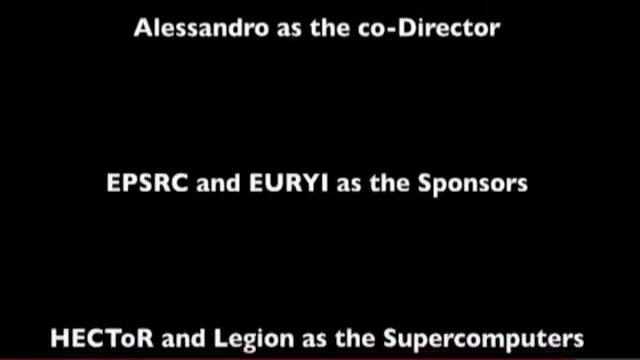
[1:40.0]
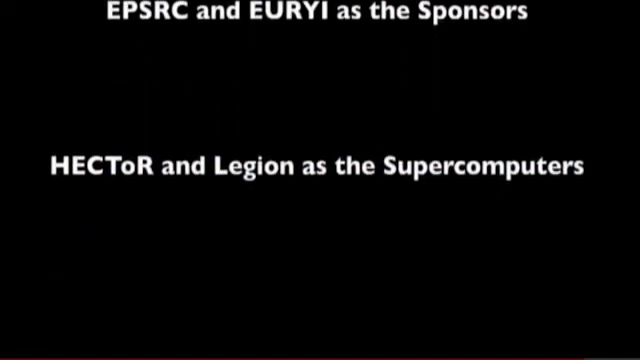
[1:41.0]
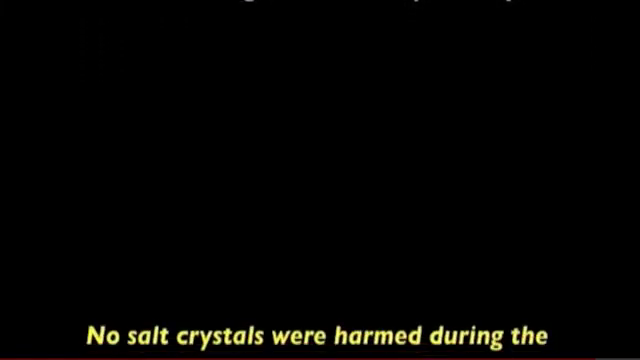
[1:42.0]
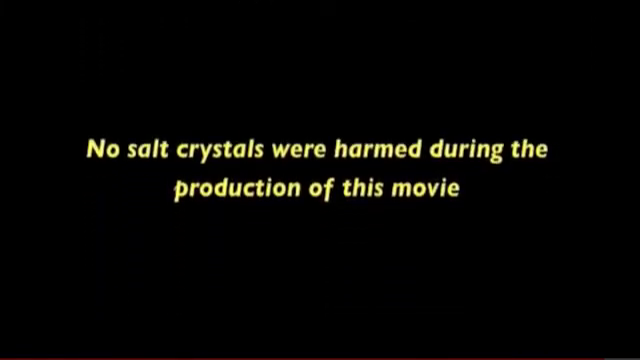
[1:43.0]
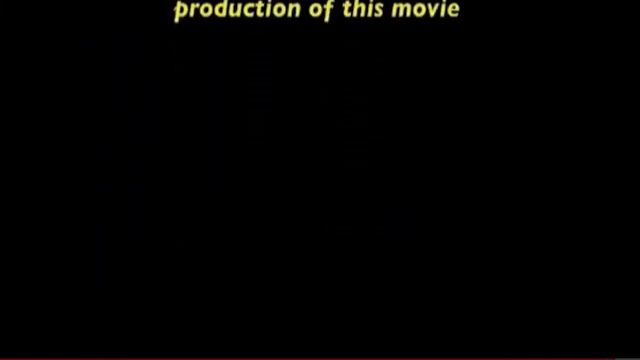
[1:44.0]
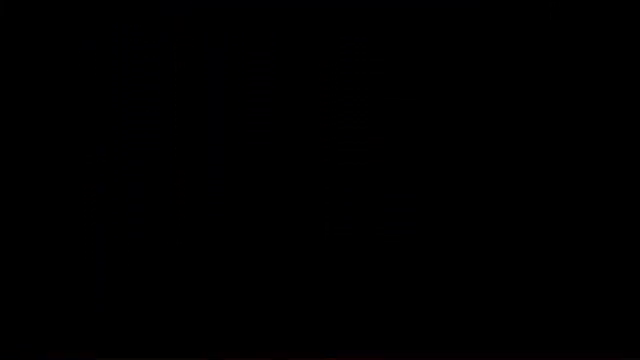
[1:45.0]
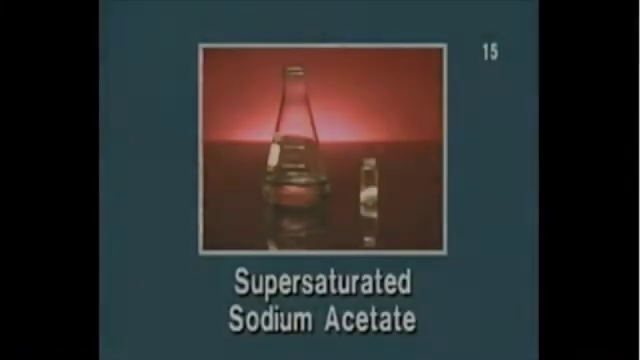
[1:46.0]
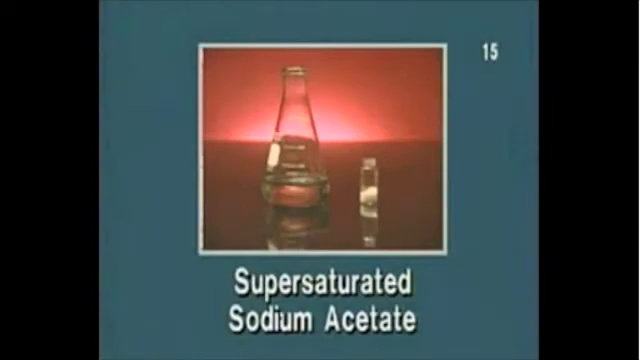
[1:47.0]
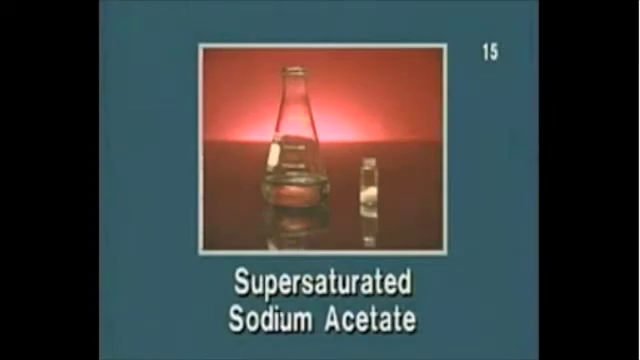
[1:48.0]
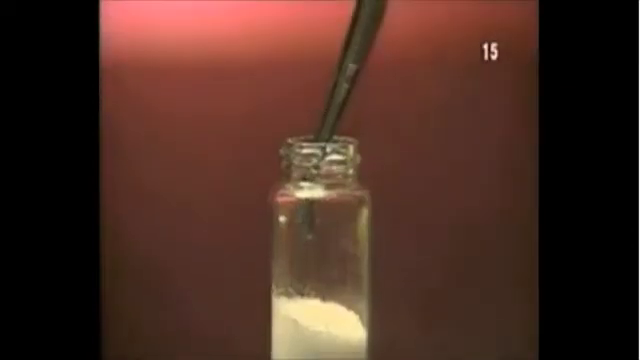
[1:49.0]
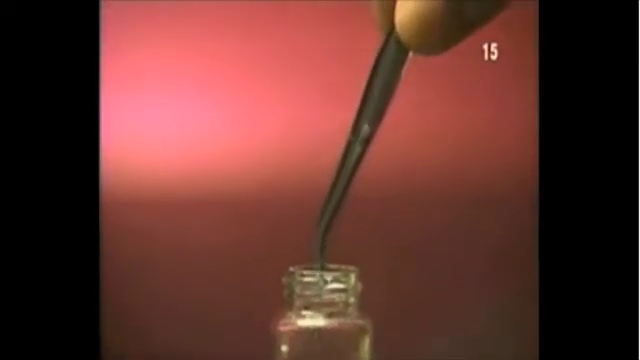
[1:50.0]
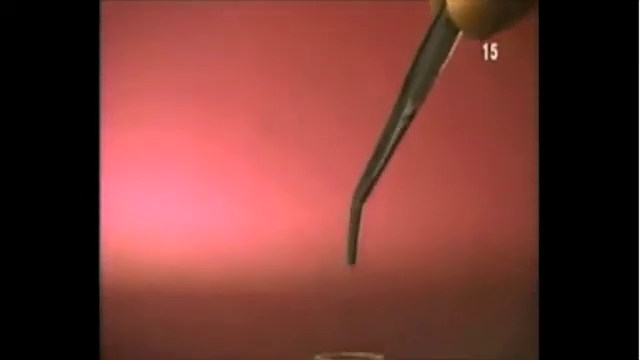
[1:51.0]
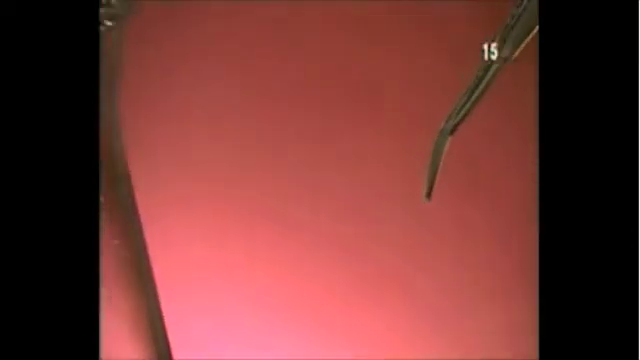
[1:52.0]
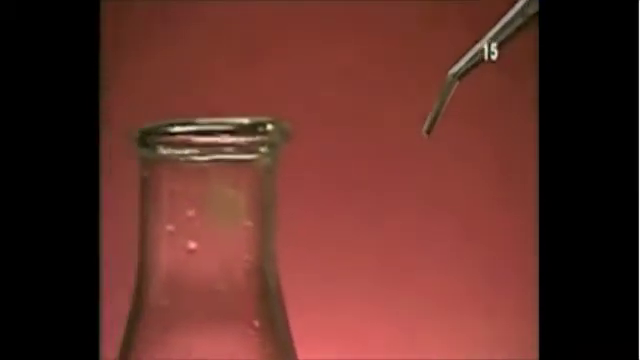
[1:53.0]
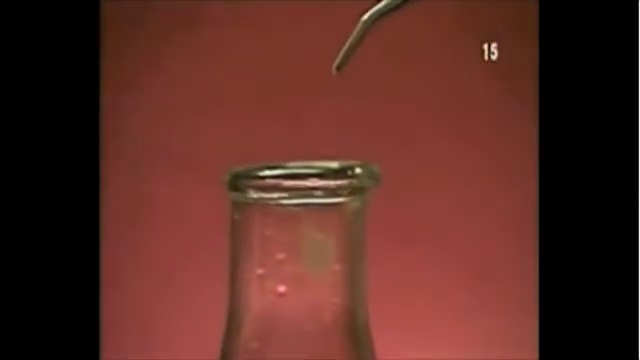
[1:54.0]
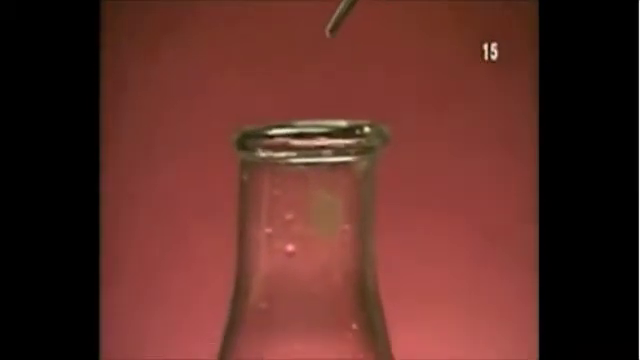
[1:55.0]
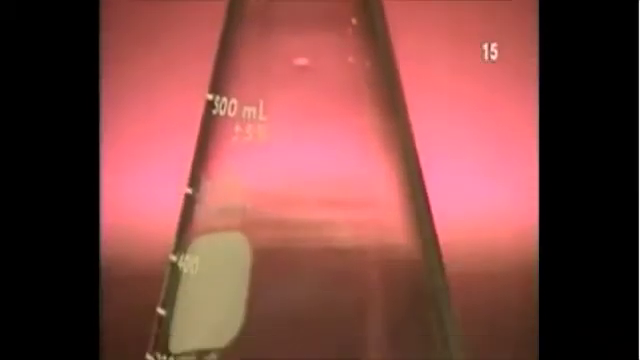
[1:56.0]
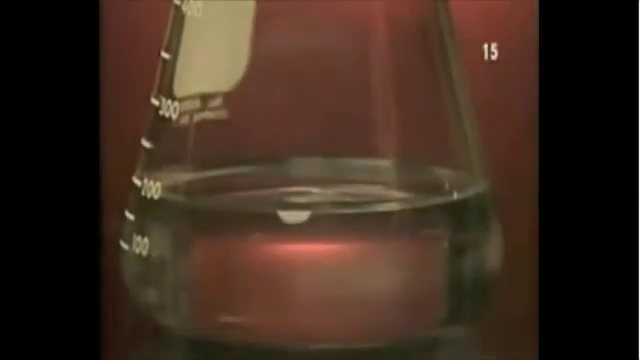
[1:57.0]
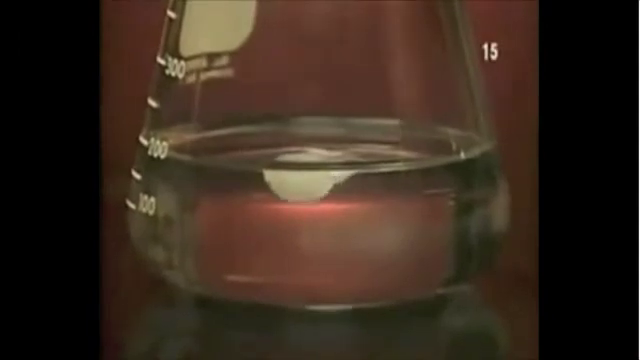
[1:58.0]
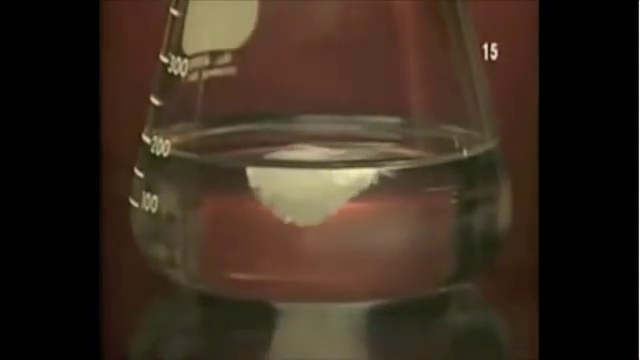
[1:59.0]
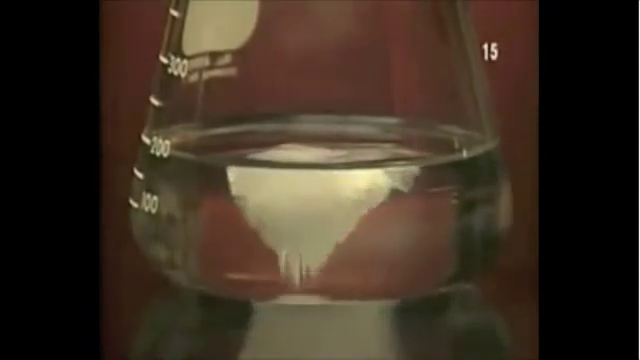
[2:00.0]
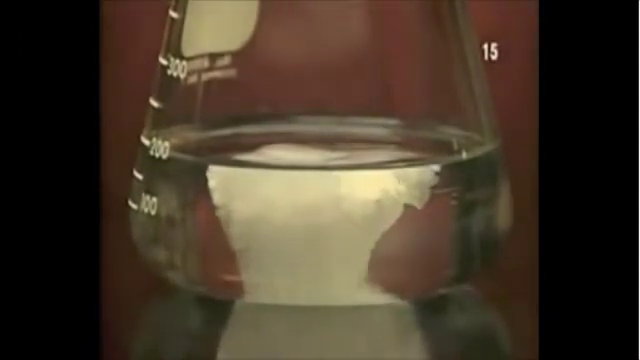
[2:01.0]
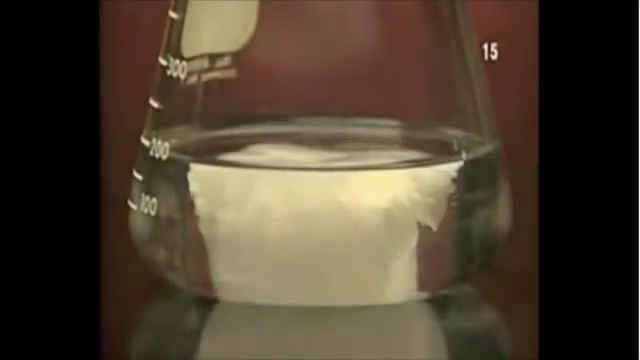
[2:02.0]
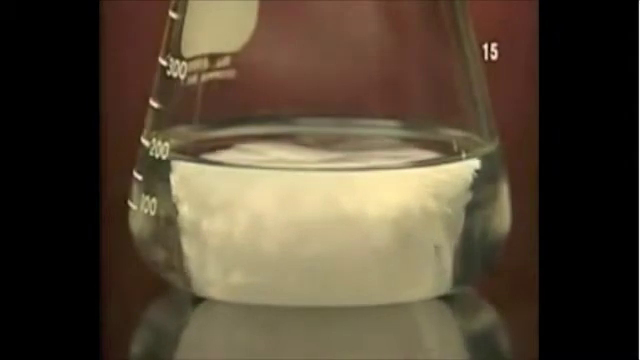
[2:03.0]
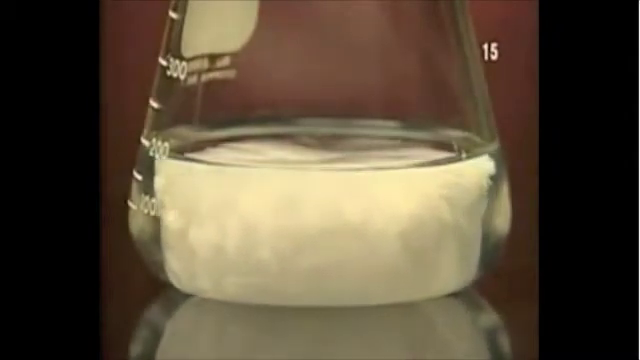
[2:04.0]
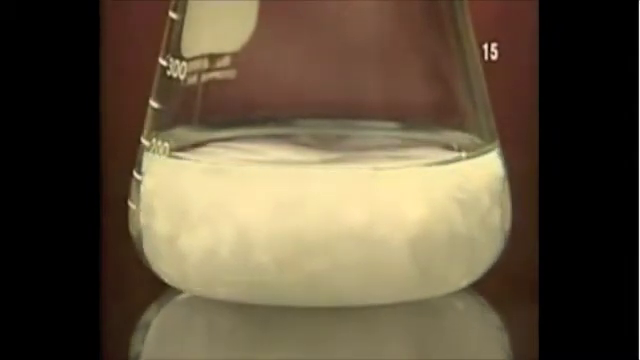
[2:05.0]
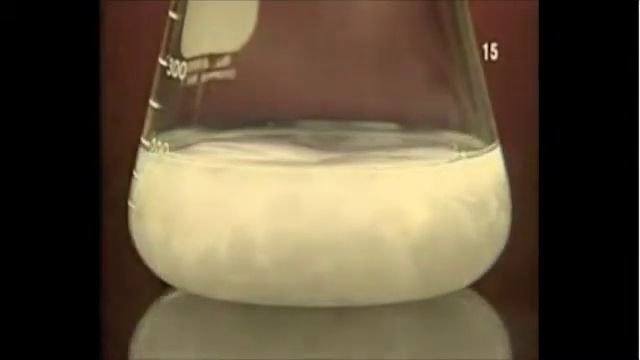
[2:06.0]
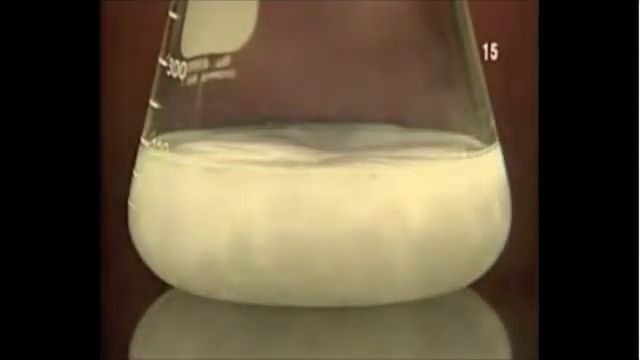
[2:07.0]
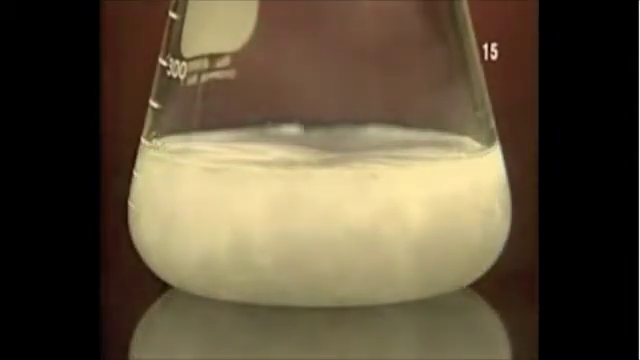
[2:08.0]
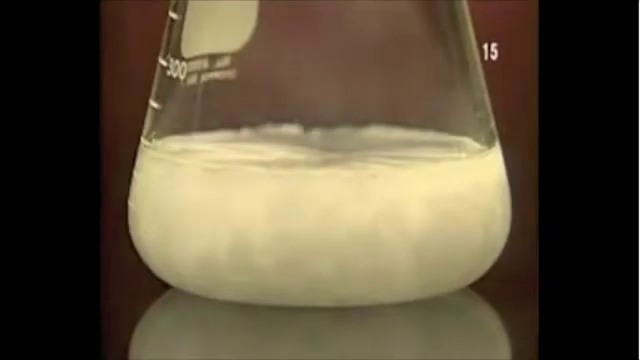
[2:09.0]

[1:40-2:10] On a black screen, yellow writing reads "no harm has come to crystals in this video," and the directors and sponsors are listed. Another black screen mentions super saturated crystals or salt. Then, in live footage rather than animation, crystals are taken out and added to a beaker of water. They dissolve, explode, expand, and drop to the bottom, slowly expanding to take up the entire bottom of the beaker. Little is visible except white water and some crystal residue on the bottom.